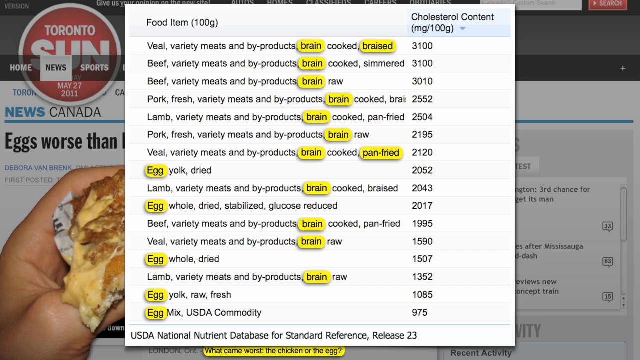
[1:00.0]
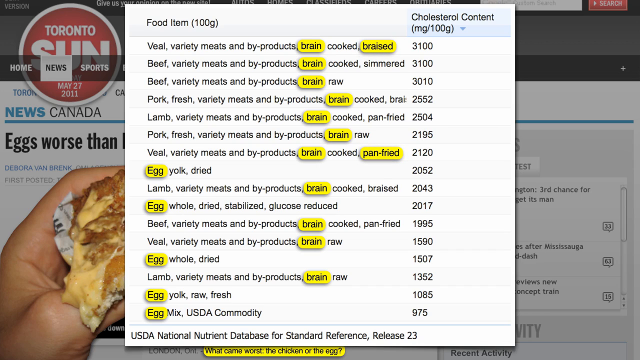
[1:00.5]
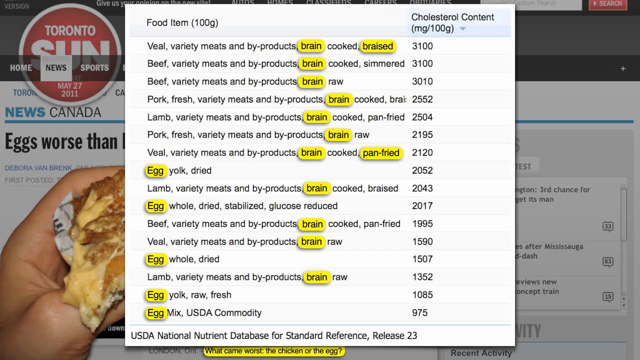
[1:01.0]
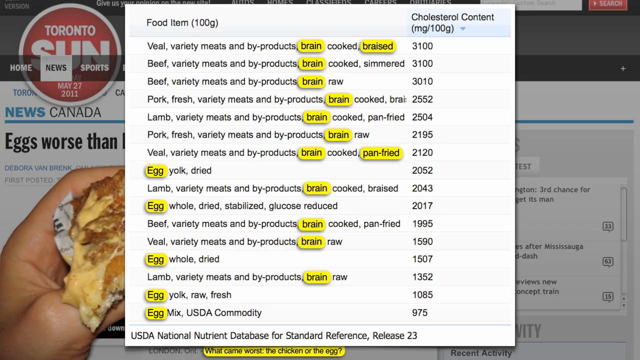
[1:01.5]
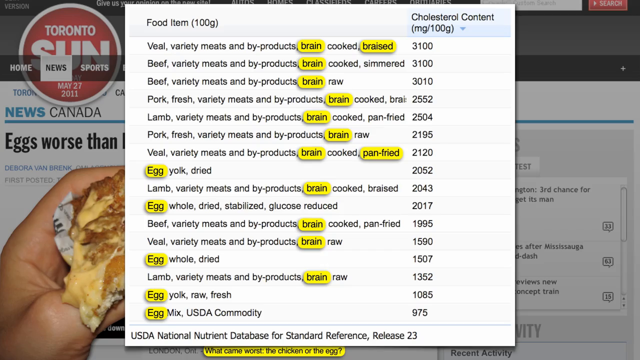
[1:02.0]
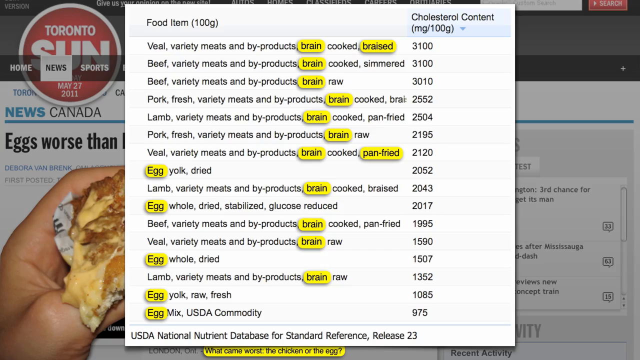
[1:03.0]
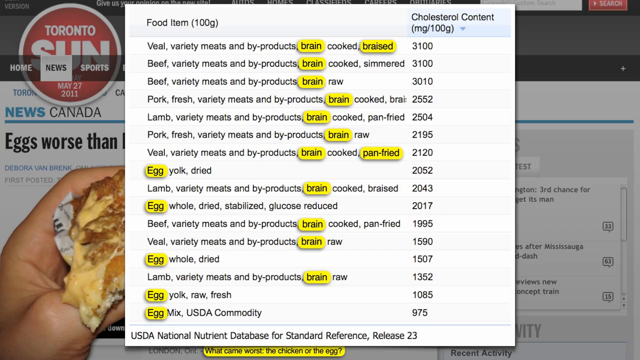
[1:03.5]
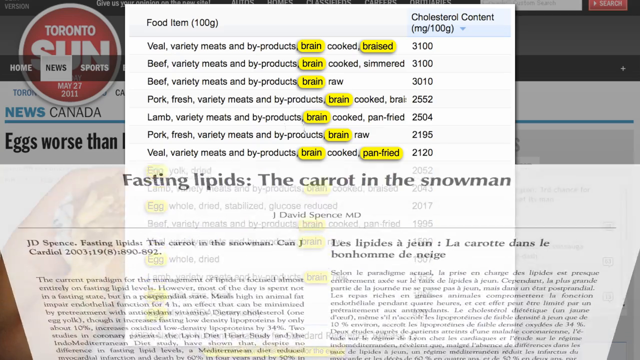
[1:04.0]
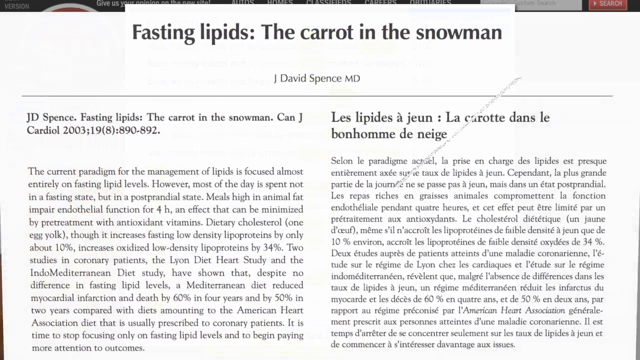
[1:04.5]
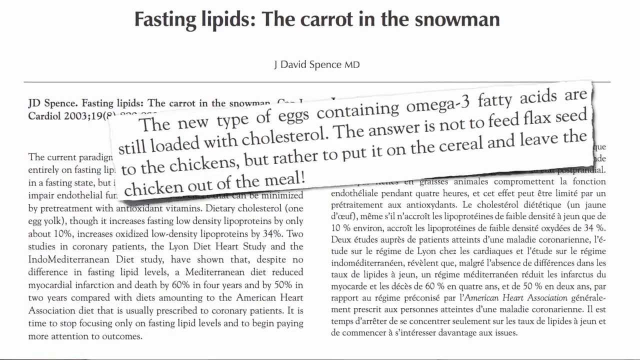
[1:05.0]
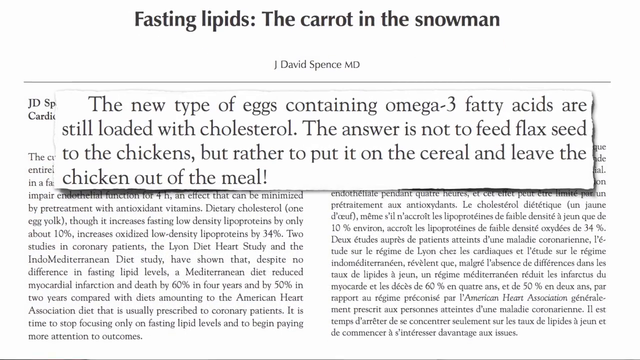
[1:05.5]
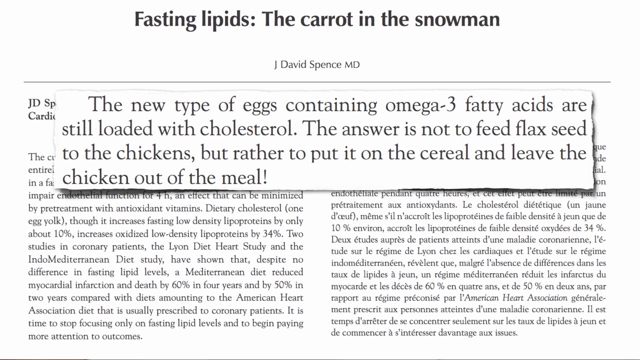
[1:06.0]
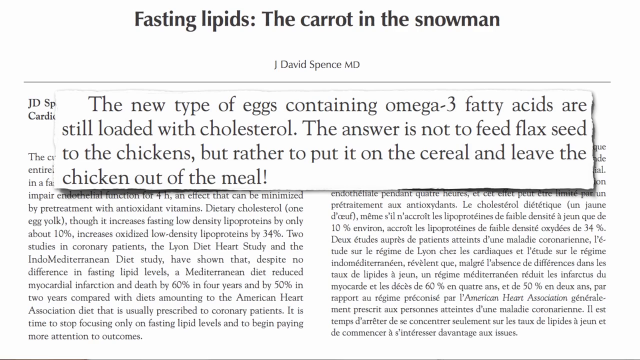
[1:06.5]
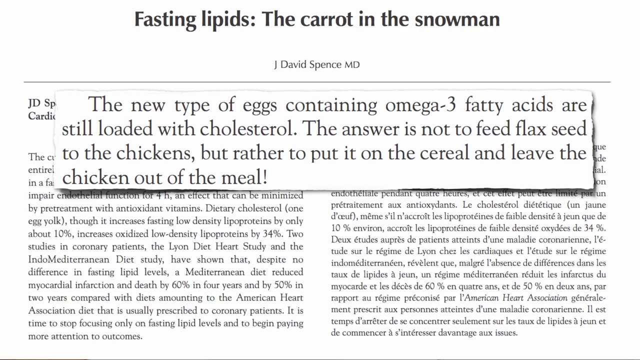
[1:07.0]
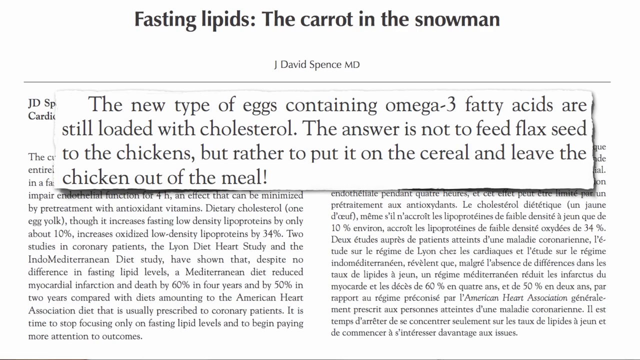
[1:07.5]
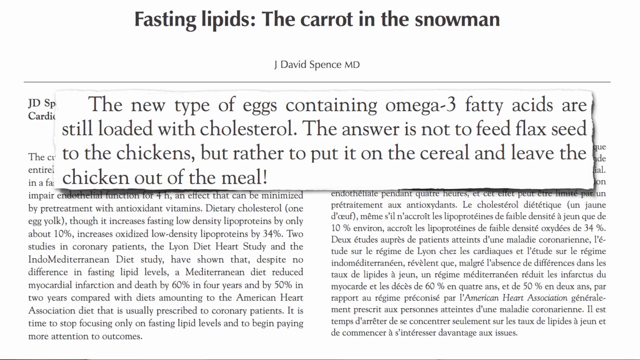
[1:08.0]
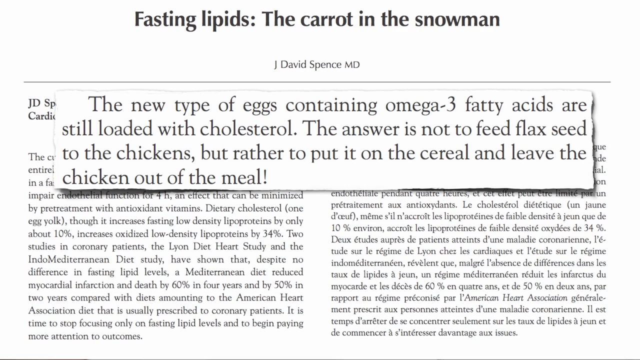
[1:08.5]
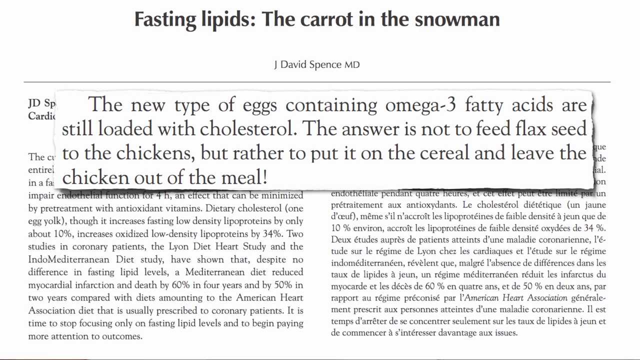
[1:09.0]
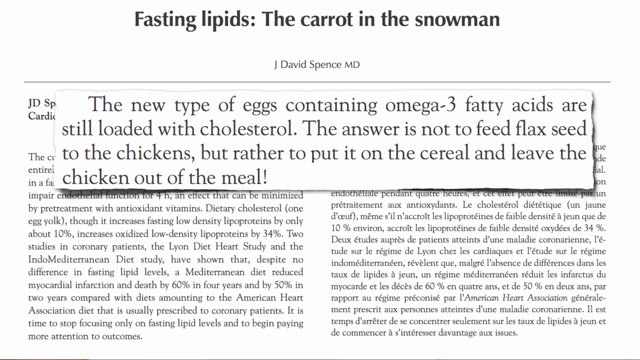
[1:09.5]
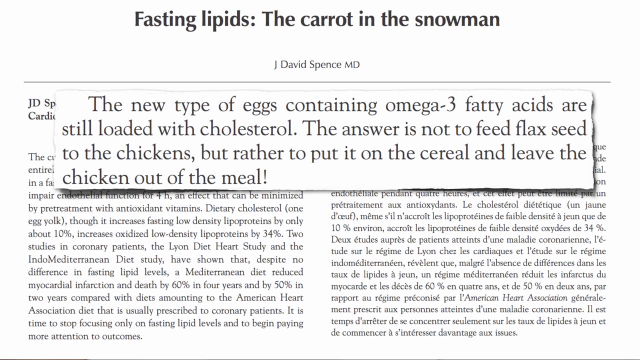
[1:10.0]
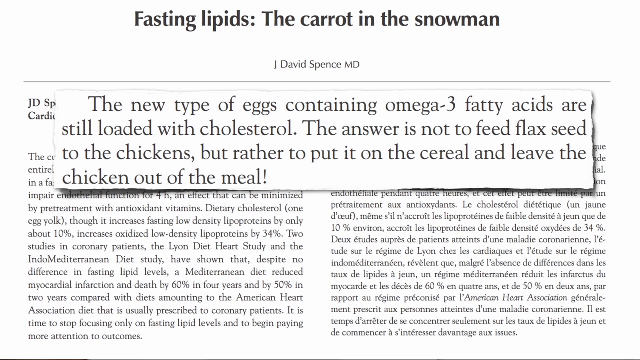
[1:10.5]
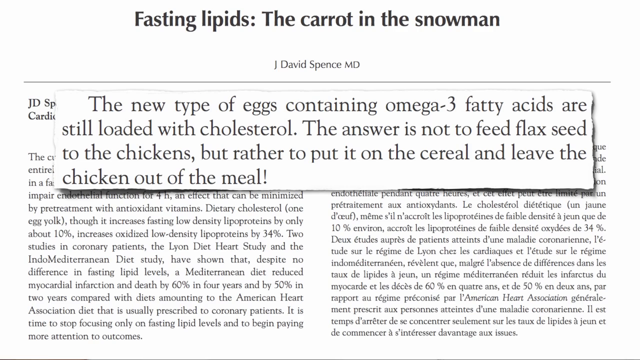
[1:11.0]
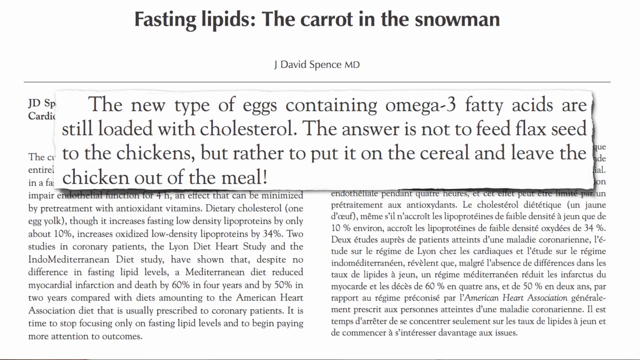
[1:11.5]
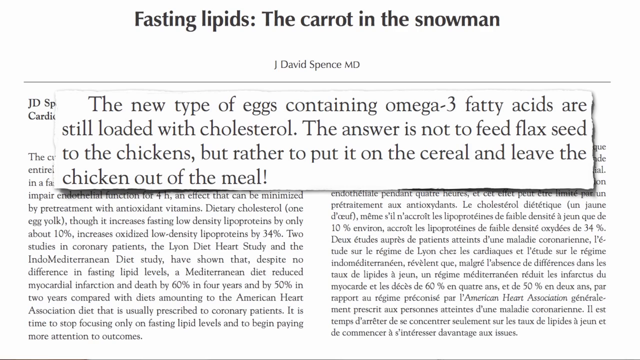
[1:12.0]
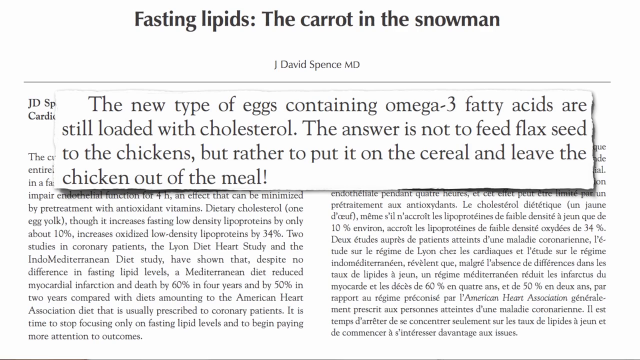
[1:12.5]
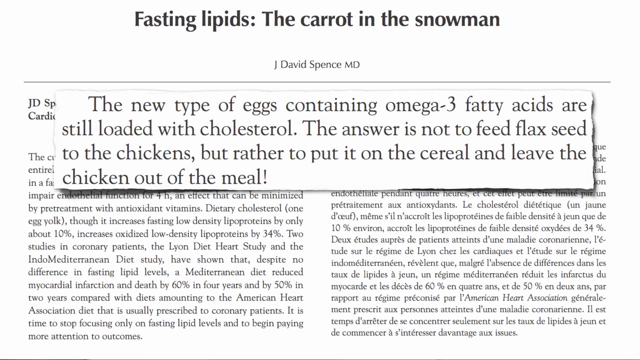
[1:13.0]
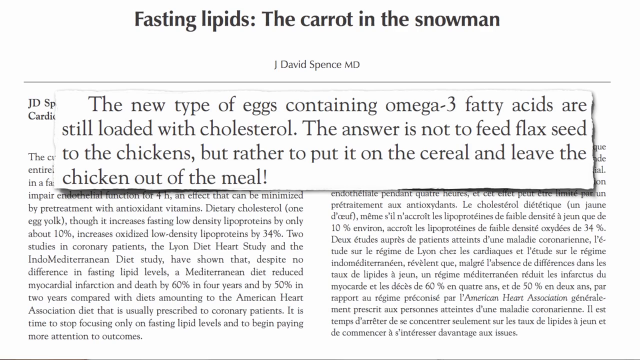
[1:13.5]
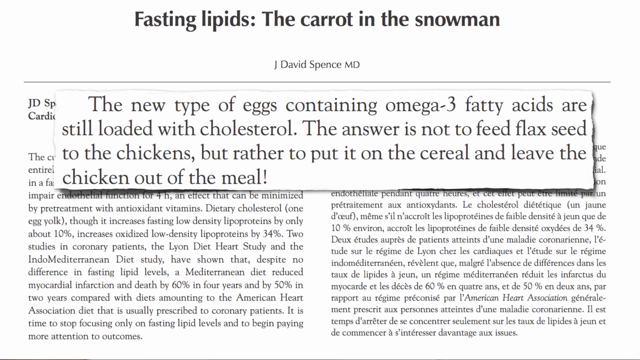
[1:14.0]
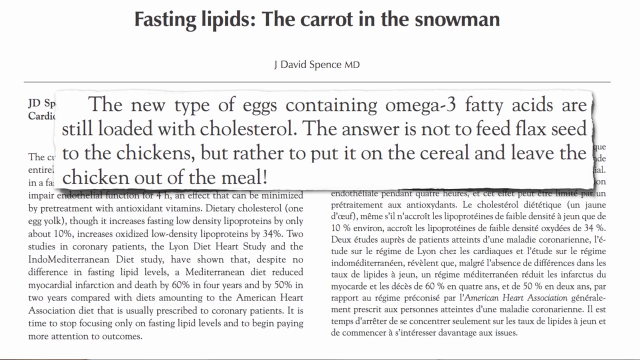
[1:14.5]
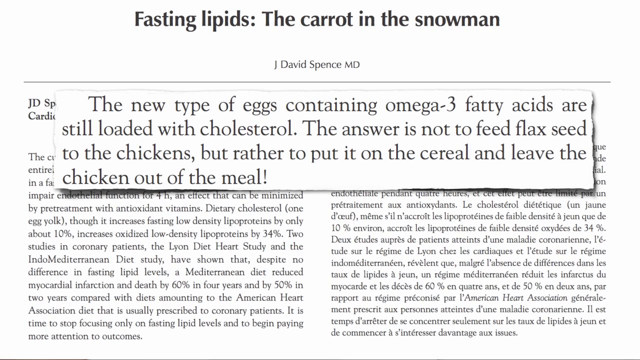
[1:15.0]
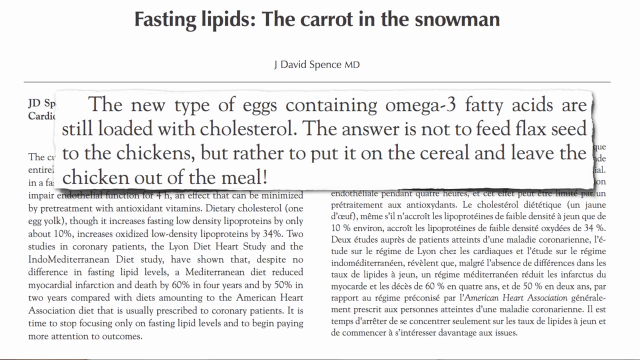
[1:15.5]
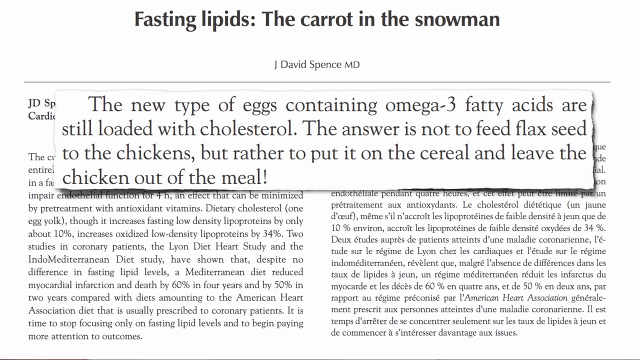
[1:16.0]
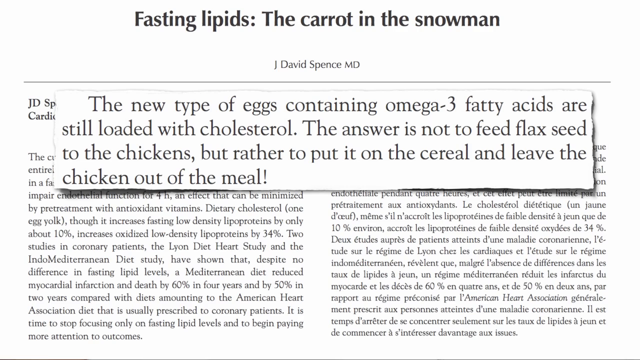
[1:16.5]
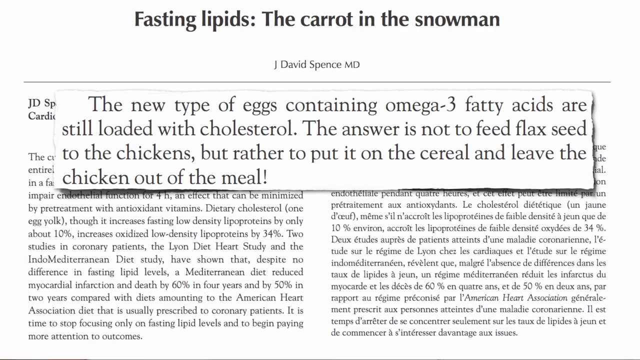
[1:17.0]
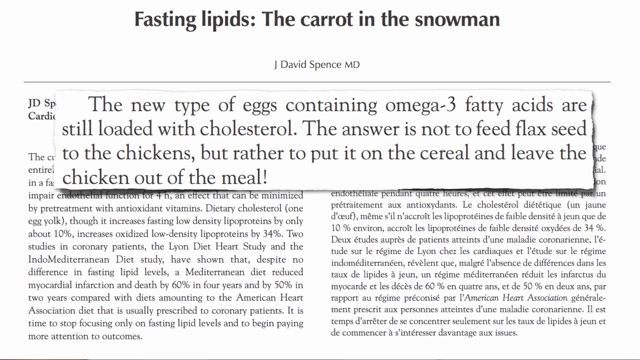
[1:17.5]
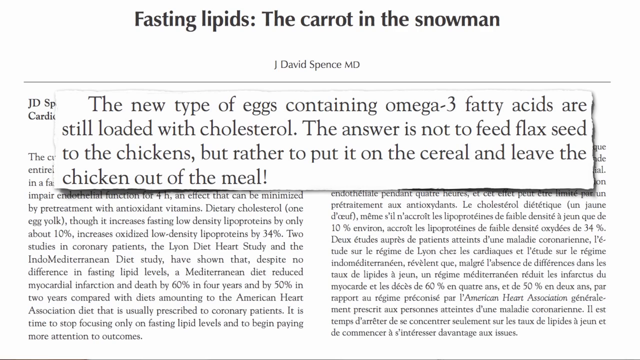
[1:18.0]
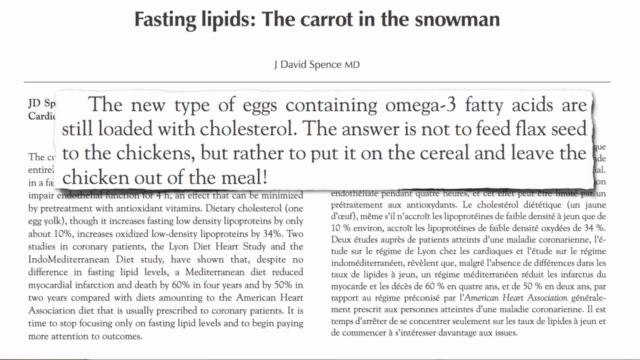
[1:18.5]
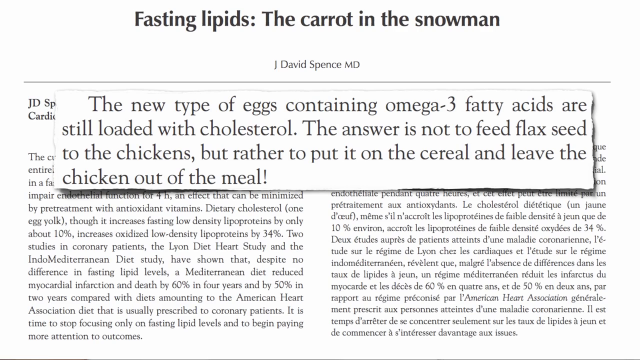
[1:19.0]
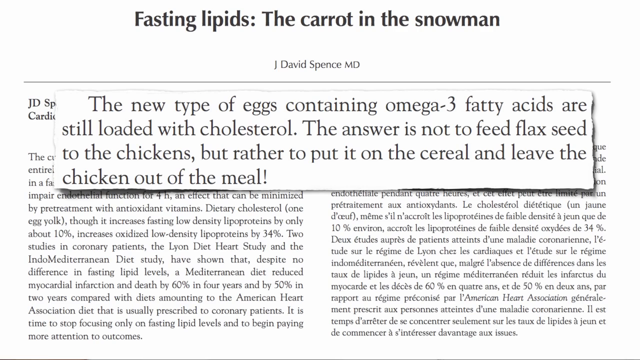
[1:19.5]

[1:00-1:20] The Toronto Sun webpage is in the background, with a white sheet overlapping it and covering roughly the middle 75%, showing 16 rows of food items, including veal, beef, pork, lamb and egg meals, with their cholesterol content on the right-hand side and several words highlighted in yellow. After a few seconds, a white journal article page rotates upward from the bottom of the screen while also moving upward, covering the Toronto Sun webpage and the food item sheet. The title of the article reads "Fasting lipids, the carrot in the snowman." Once the article fully covers the screen, a small white rectangular sheet expands from the top right-hand side, rotates and covers the top of the article with text reading "The new type of eggs containing omega-3 fatty acids are still loaded with cholesterol. The answer is not to feed flaxseed to the chickens, but rather to put on the cereal and leave the chicken out of the meal." For the remainder of the shot, the article with the overlapping white rectangular sheet of text stays stationary.